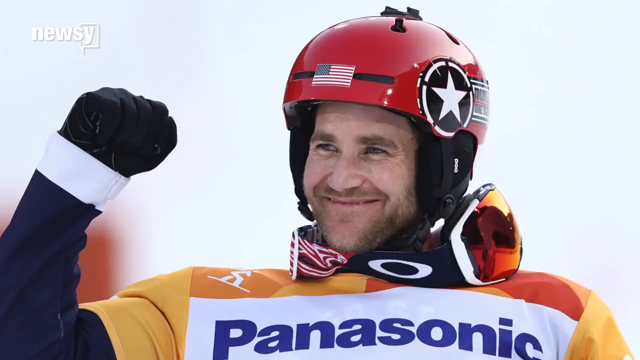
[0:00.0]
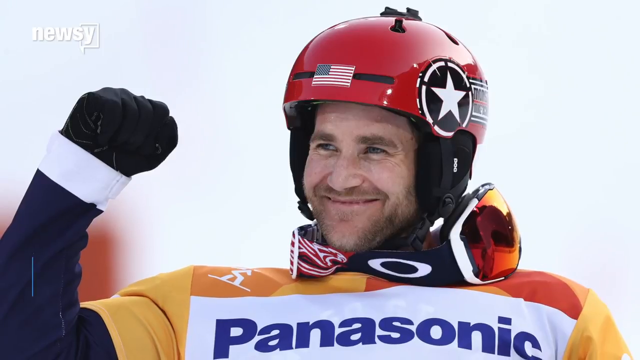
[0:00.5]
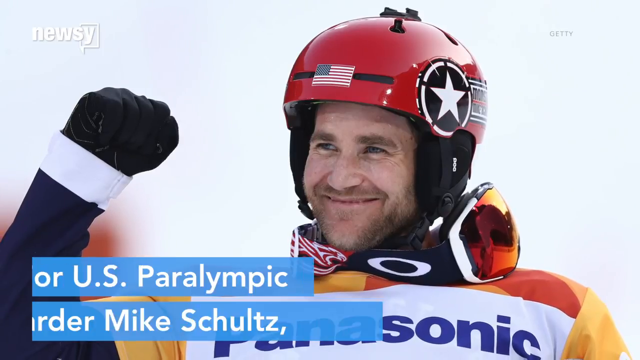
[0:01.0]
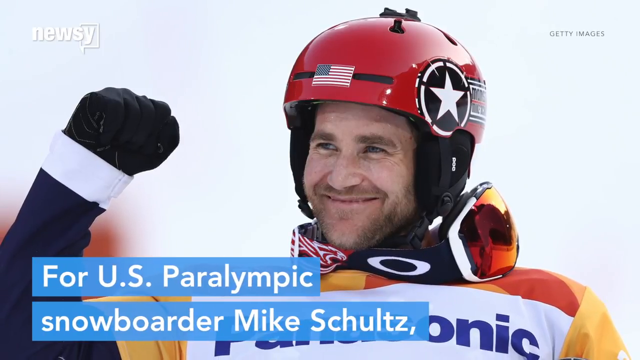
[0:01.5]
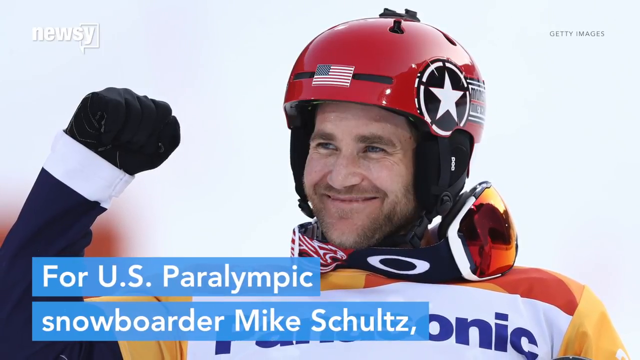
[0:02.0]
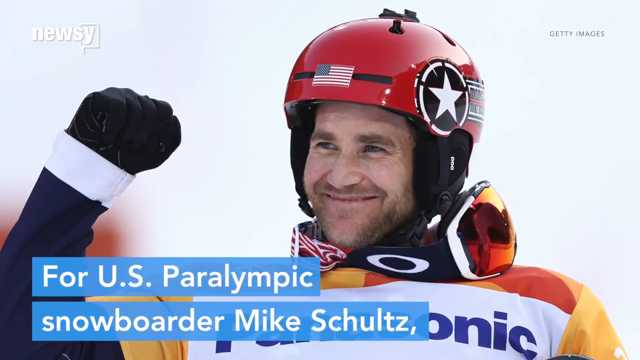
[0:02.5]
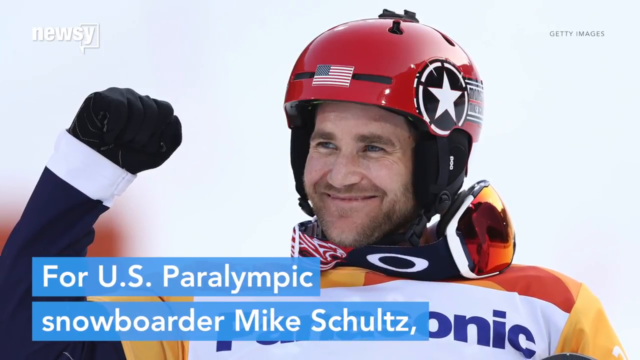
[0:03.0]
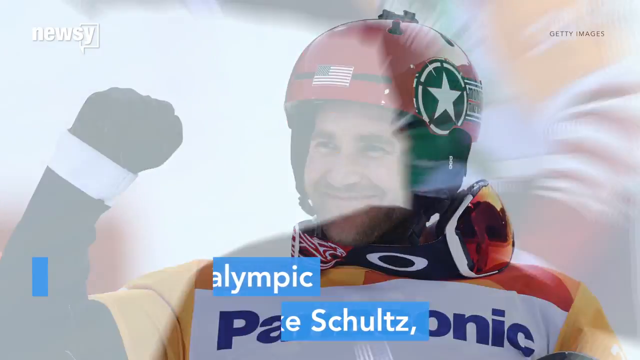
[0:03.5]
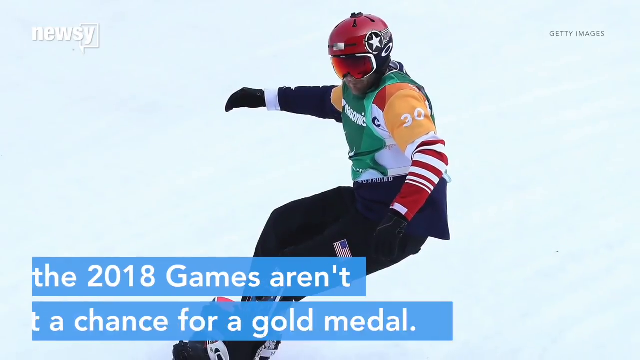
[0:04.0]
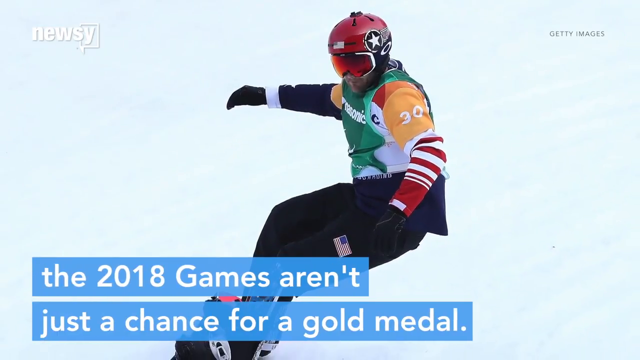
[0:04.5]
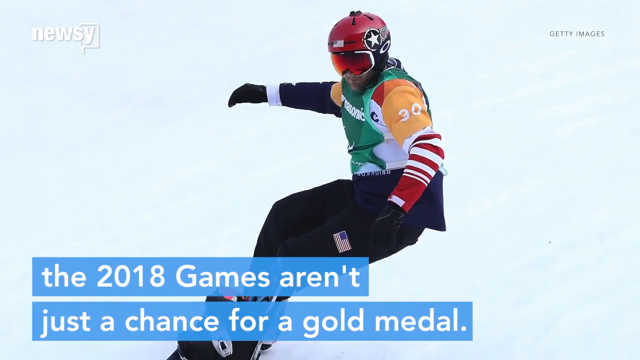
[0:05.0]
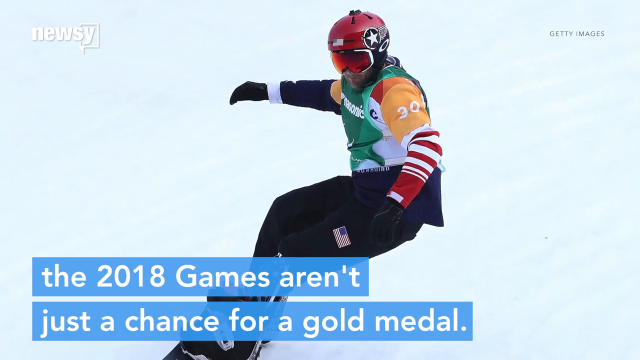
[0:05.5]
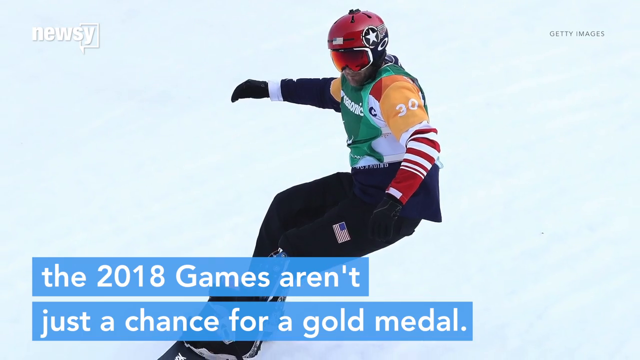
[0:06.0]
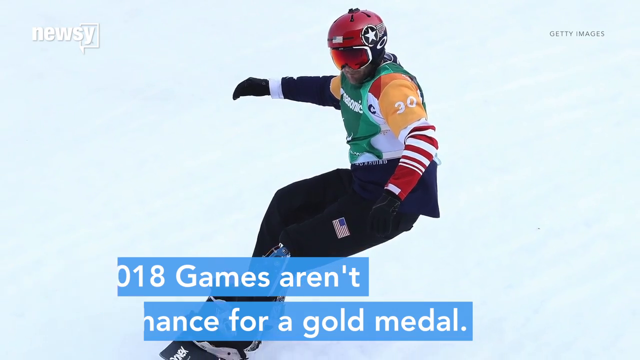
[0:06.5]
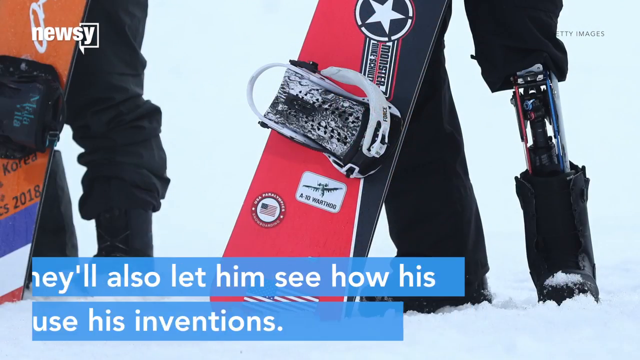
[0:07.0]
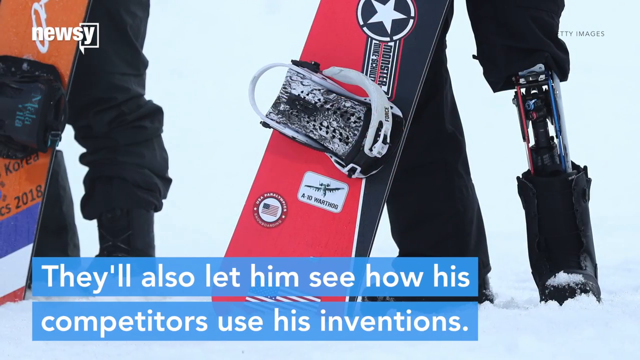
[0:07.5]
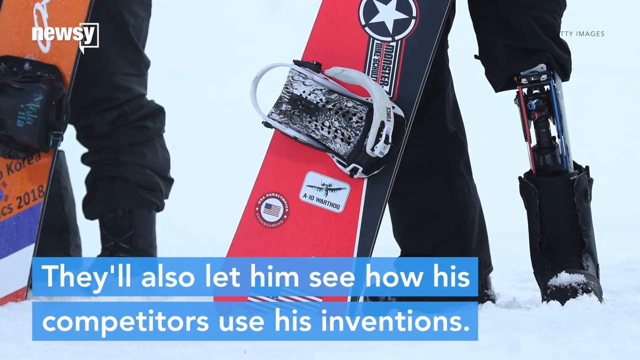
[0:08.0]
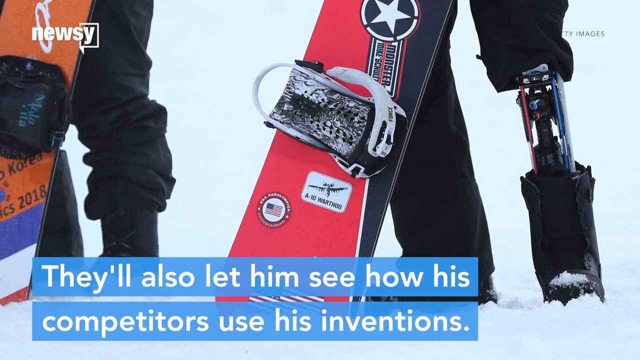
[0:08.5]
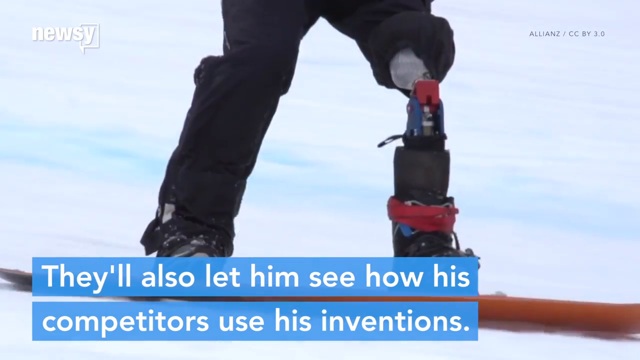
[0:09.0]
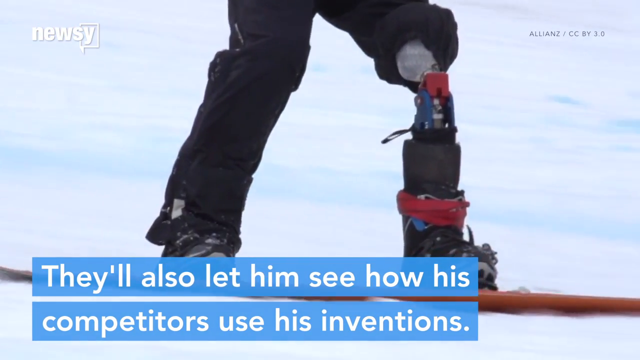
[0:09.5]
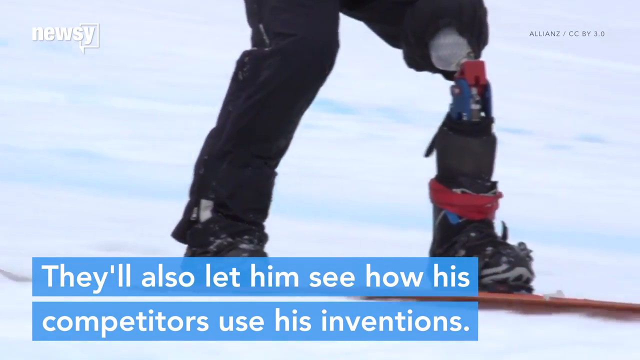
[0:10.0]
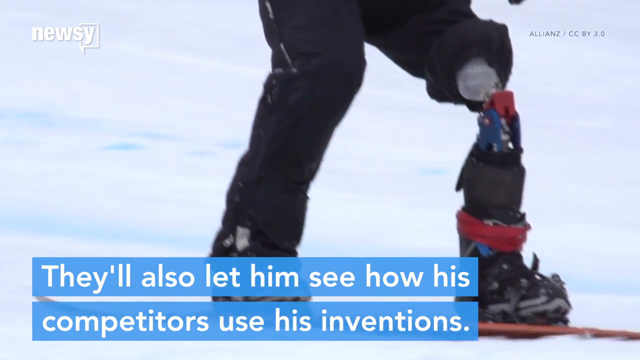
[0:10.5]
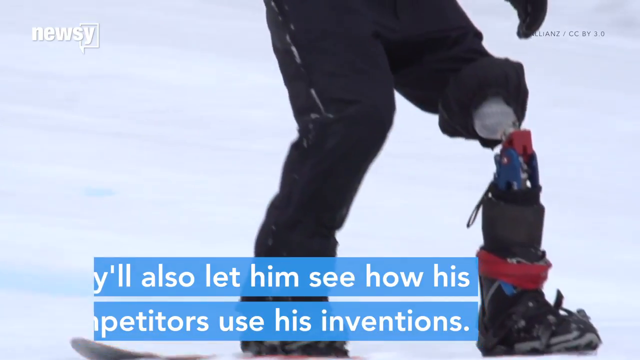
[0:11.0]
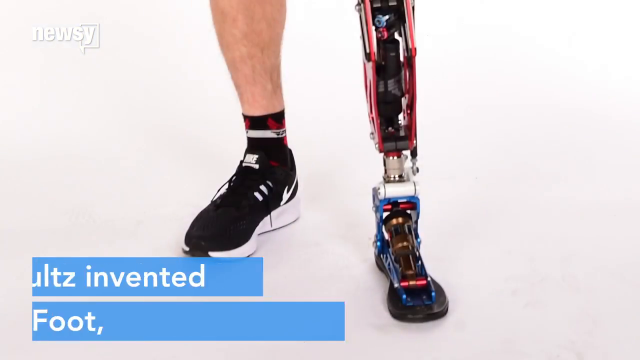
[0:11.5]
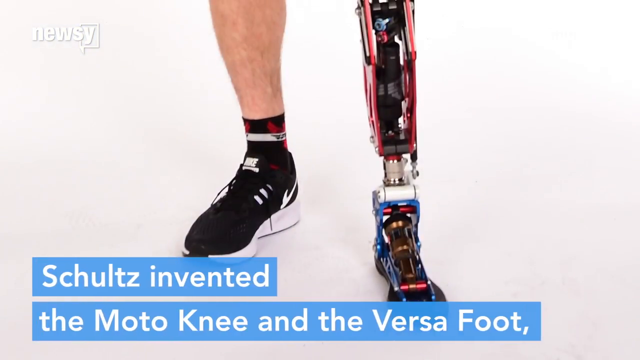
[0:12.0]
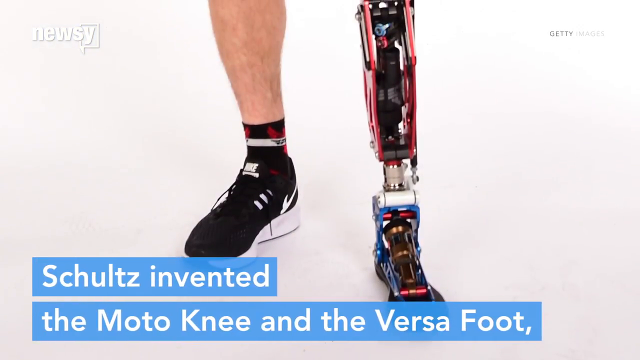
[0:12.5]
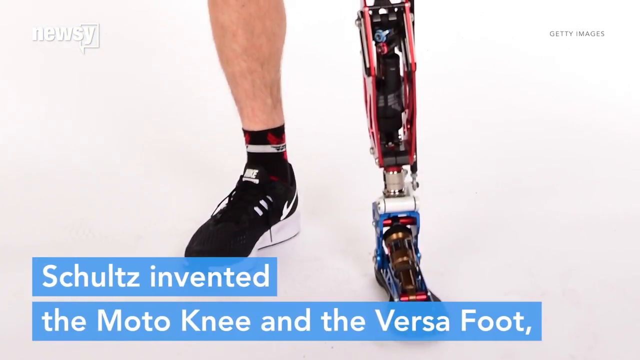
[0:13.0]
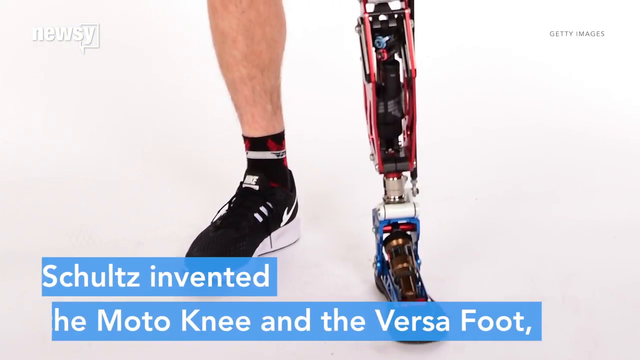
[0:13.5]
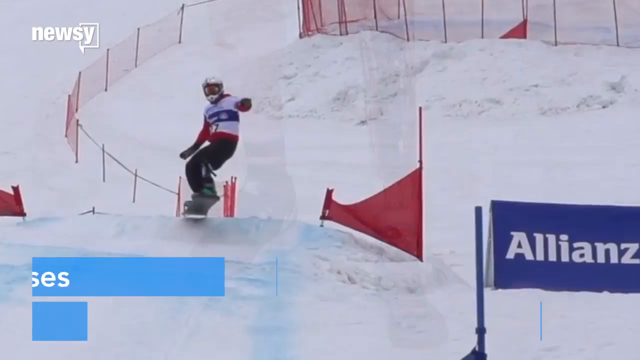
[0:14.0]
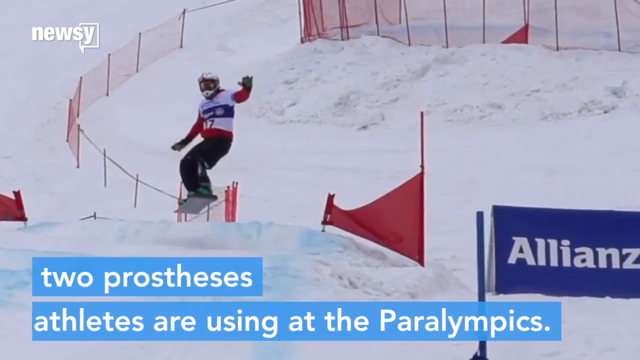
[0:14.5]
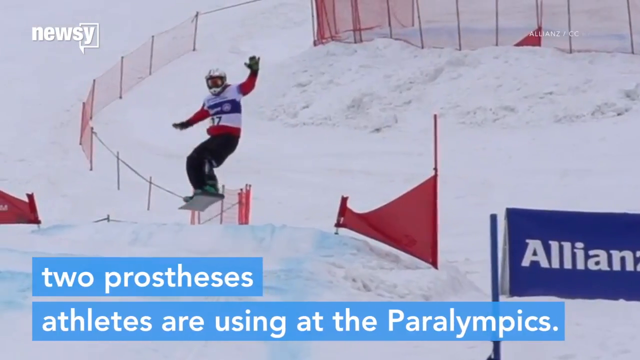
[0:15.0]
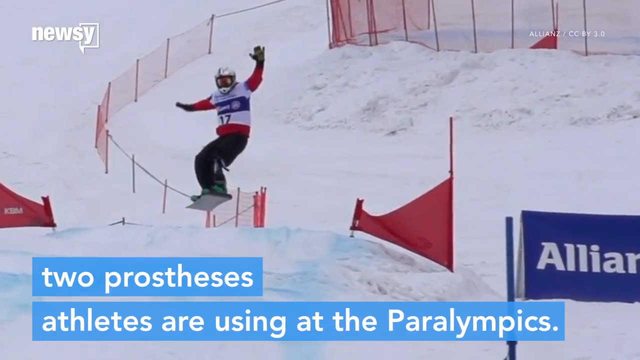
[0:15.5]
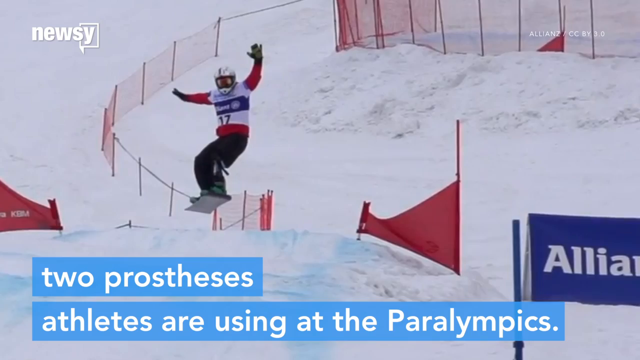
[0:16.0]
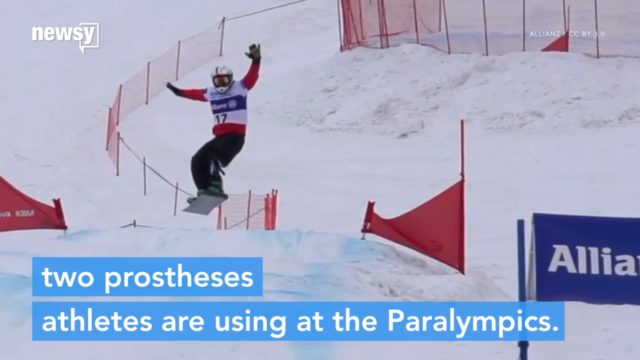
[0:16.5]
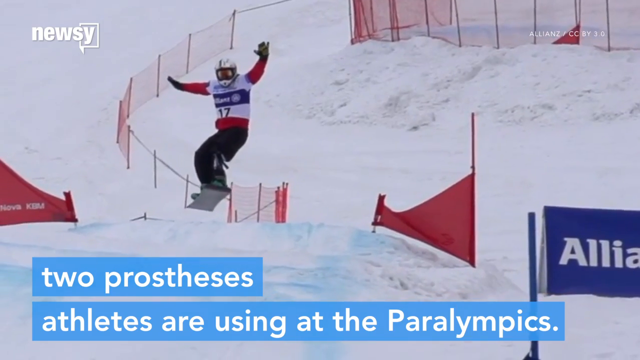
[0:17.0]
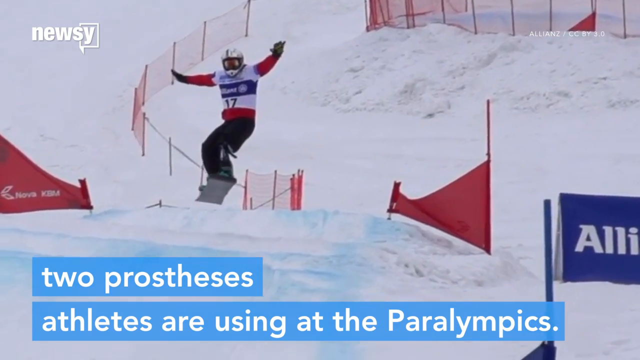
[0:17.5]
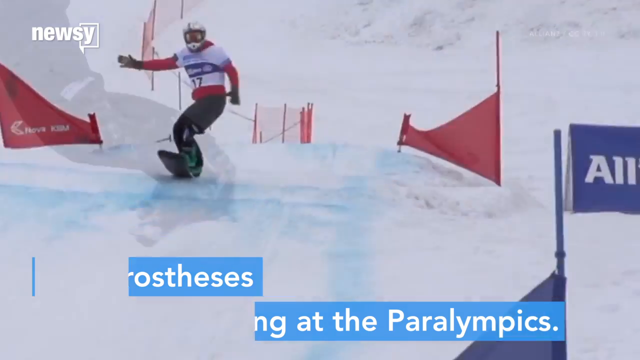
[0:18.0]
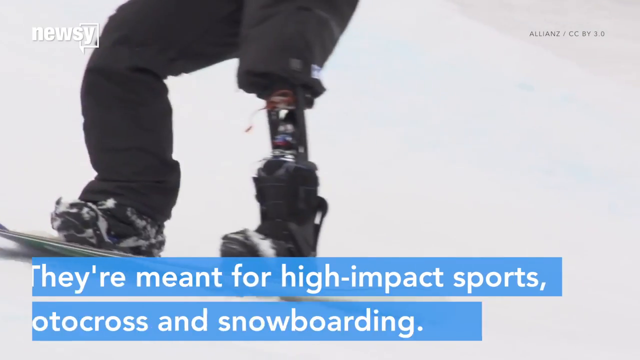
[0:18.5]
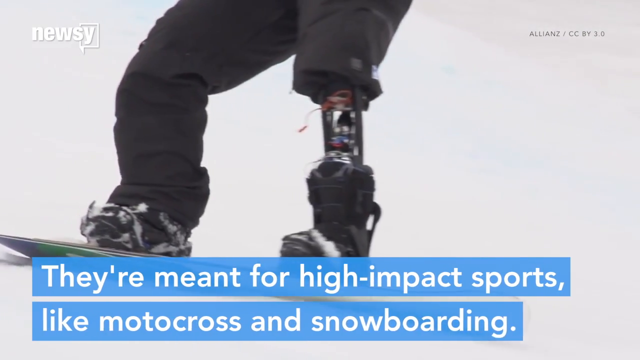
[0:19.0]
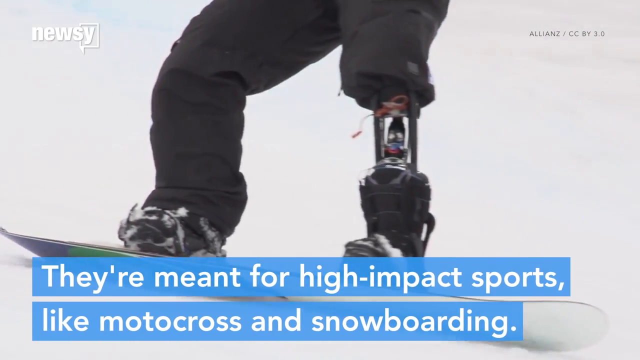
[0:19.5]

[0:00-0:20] The video opens on a close-up of a snow skier wearing a red helmet with a USA patch on the front. On the left side of his helmet is something big, round and circular with a white star. He has a medium complexion, and his uniform is red, white, blue, orange and yellow, with "Panasonic" all the way across the top of his chest. His right arm is extended with a fist, and he is smiling. Text reads "For U.S. Paralympic snowboarder Mike Schultz," followed by "The 2018 Games aren't just a chance for a gold medal. They'll also let him see how his competitors use his inventions." He is missing his right leg and has a prosthetic with a ski on it.